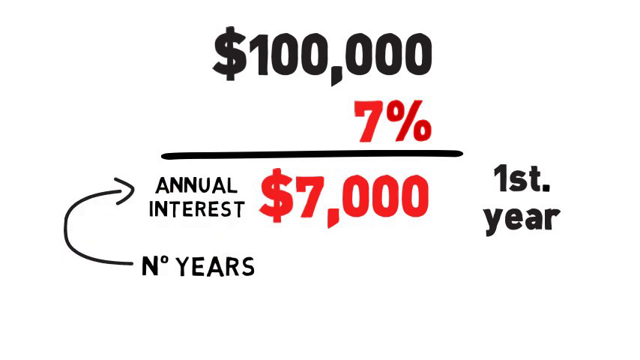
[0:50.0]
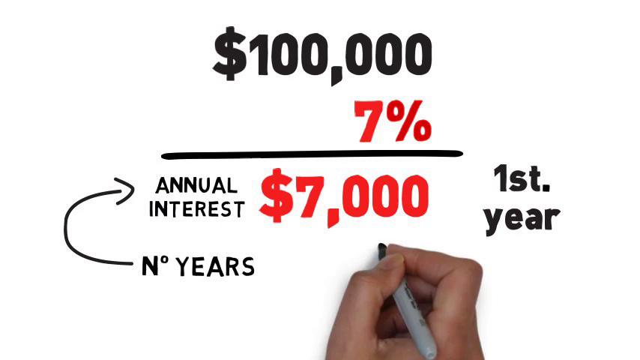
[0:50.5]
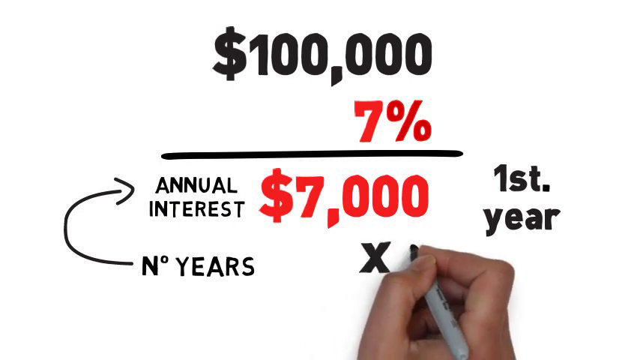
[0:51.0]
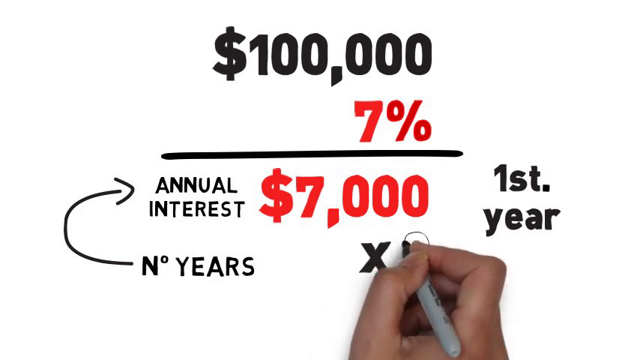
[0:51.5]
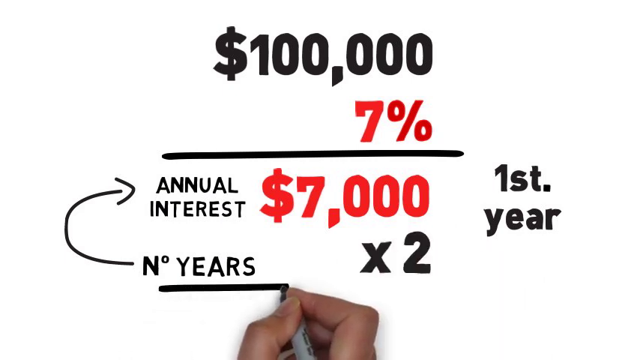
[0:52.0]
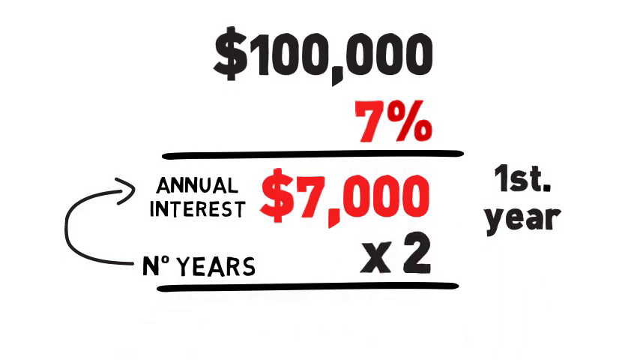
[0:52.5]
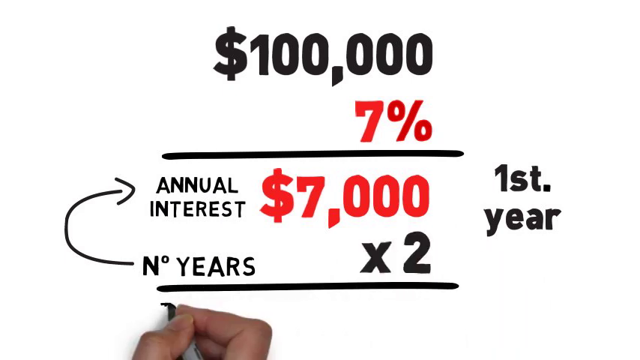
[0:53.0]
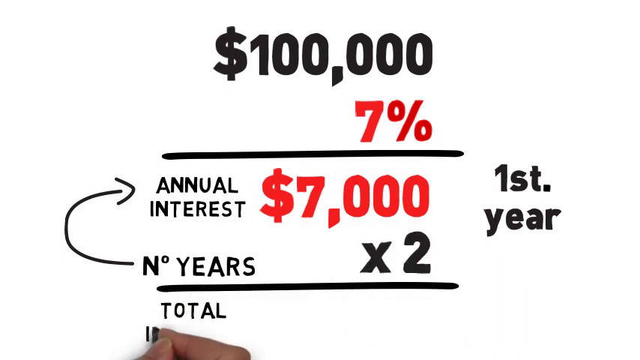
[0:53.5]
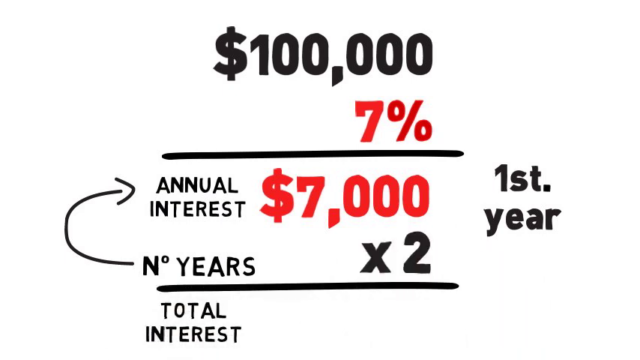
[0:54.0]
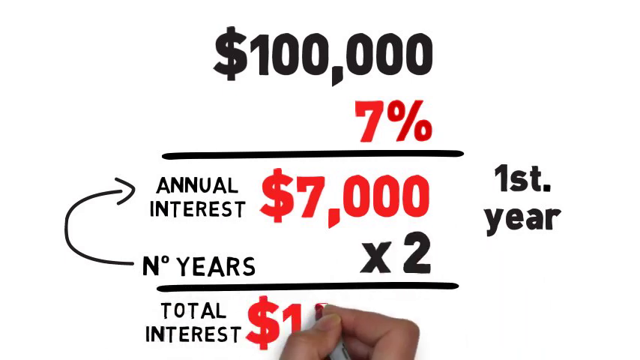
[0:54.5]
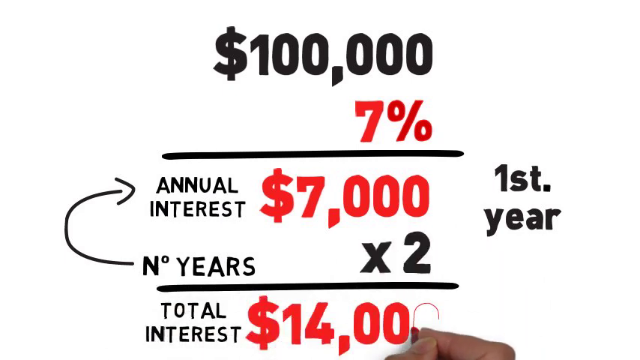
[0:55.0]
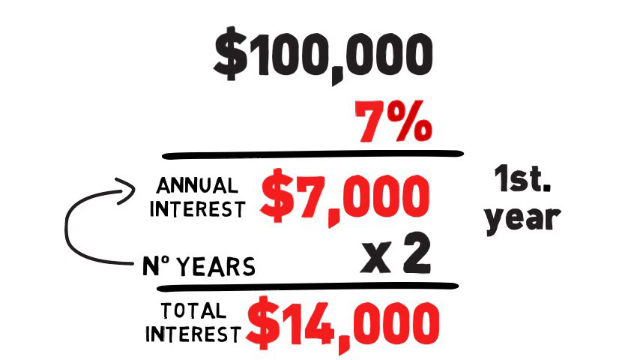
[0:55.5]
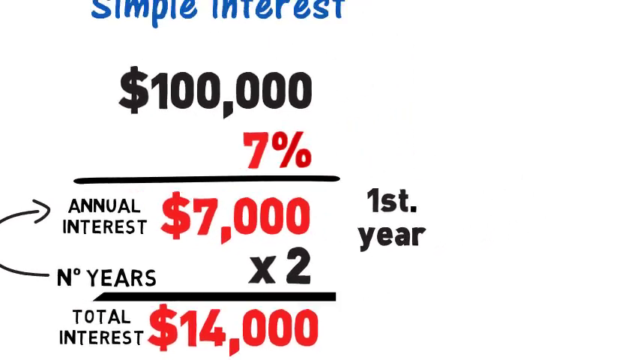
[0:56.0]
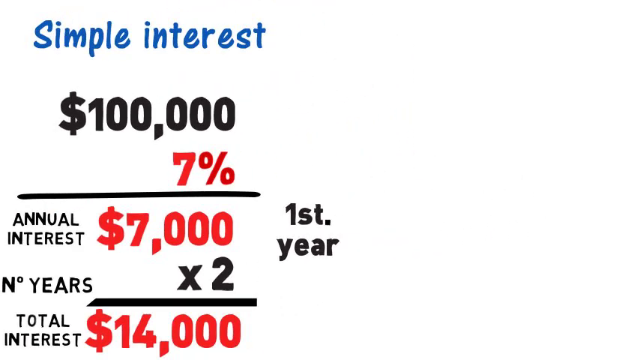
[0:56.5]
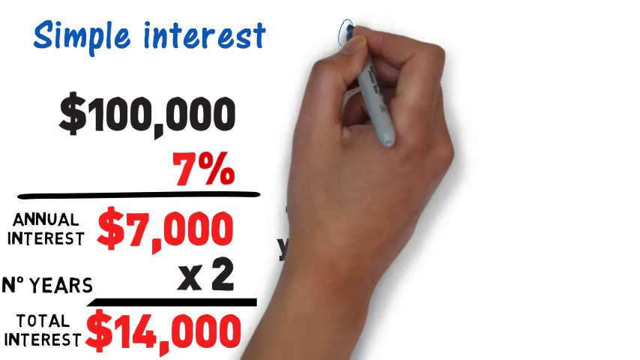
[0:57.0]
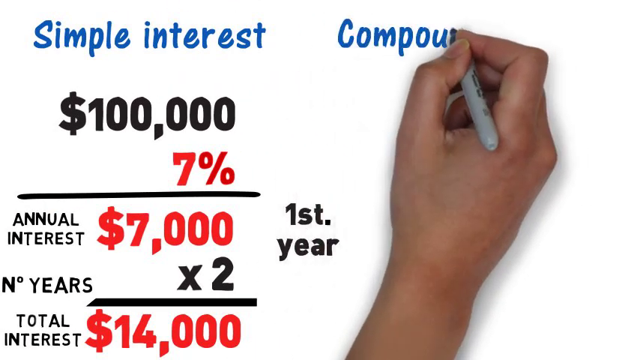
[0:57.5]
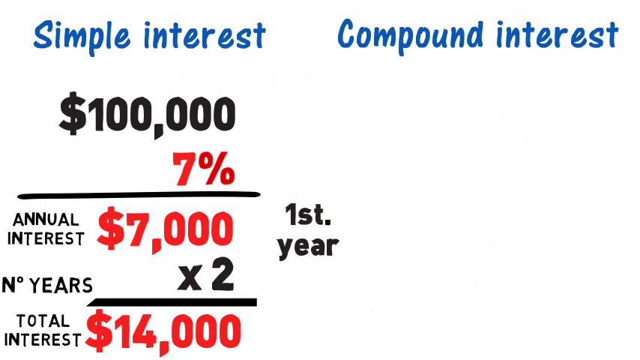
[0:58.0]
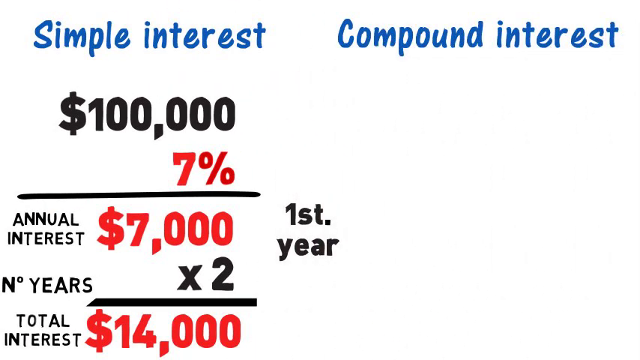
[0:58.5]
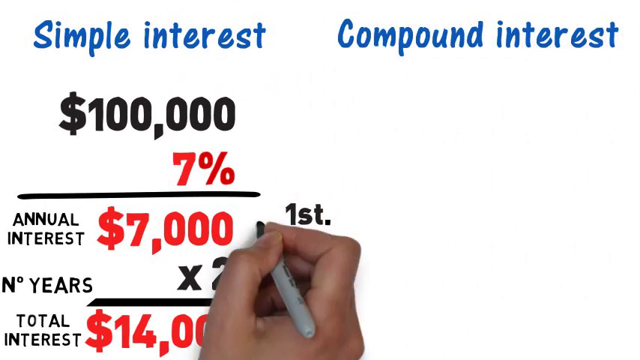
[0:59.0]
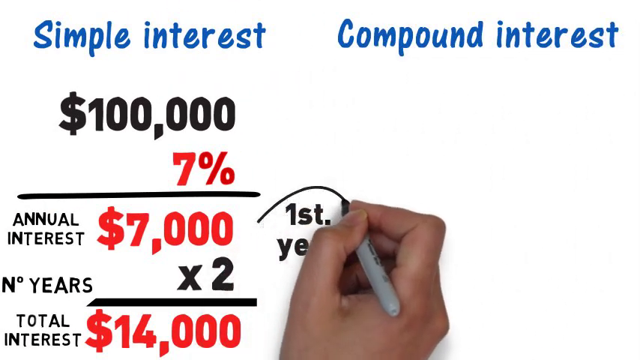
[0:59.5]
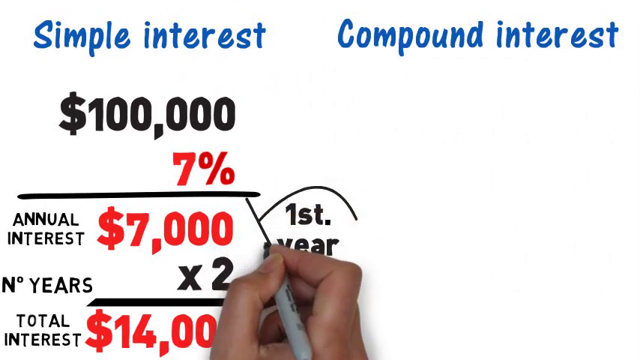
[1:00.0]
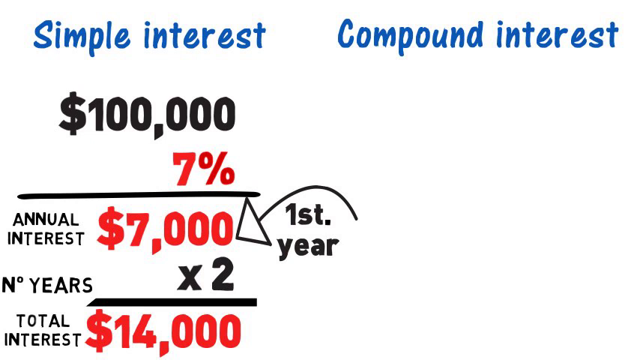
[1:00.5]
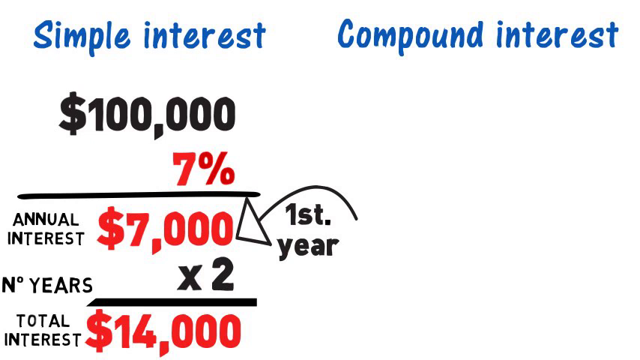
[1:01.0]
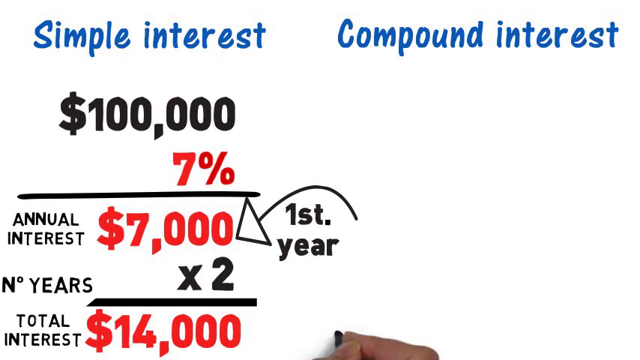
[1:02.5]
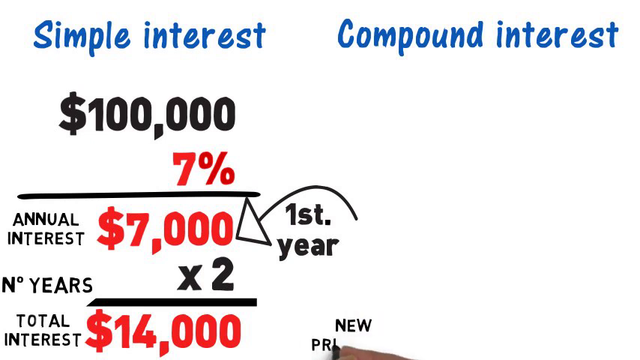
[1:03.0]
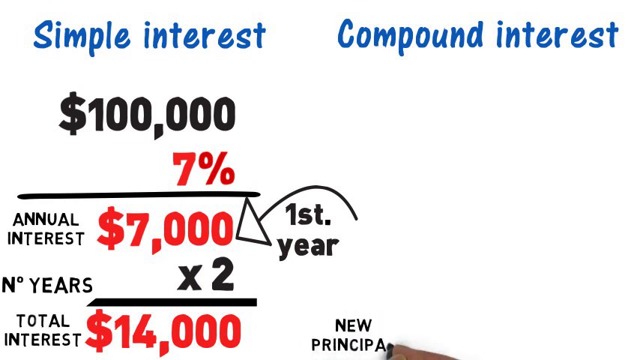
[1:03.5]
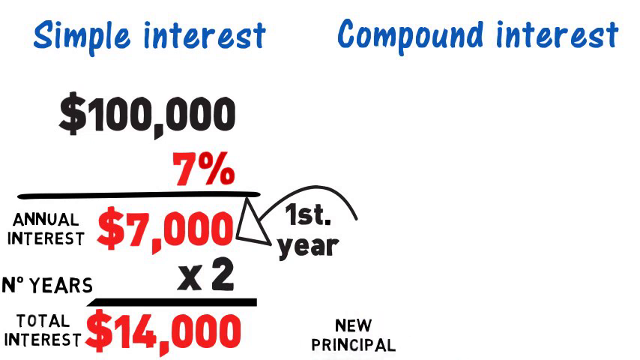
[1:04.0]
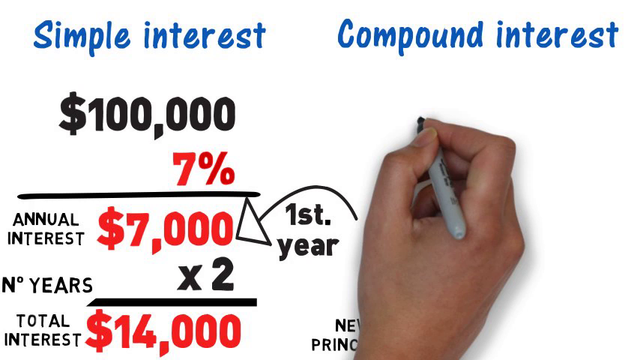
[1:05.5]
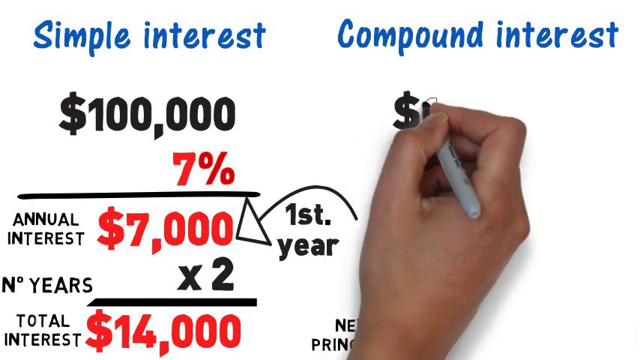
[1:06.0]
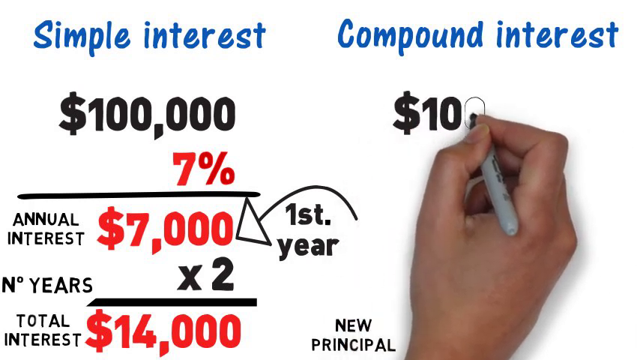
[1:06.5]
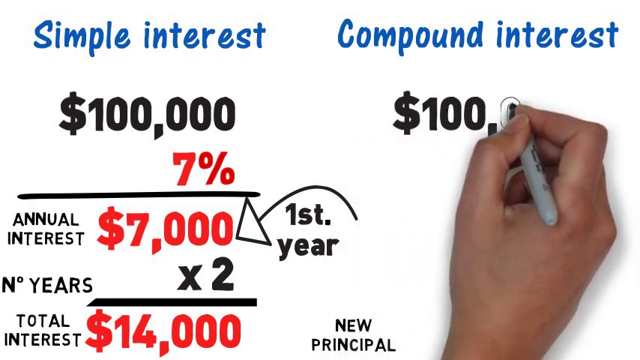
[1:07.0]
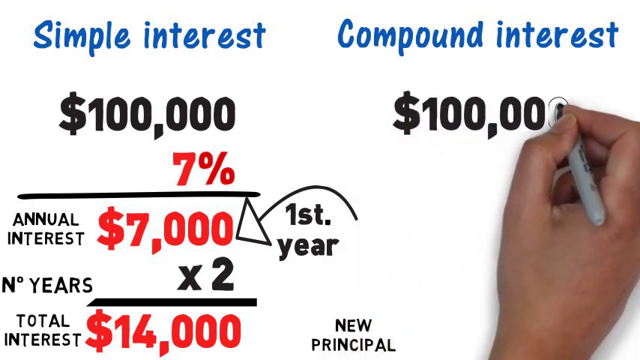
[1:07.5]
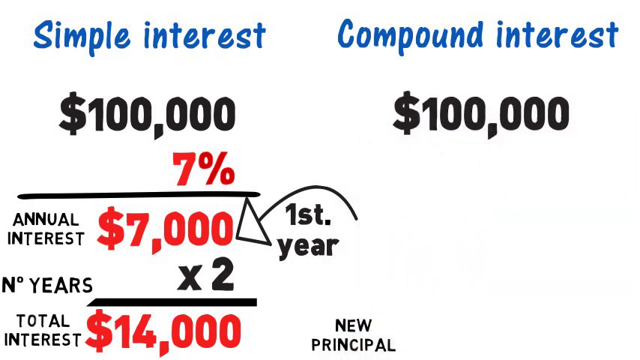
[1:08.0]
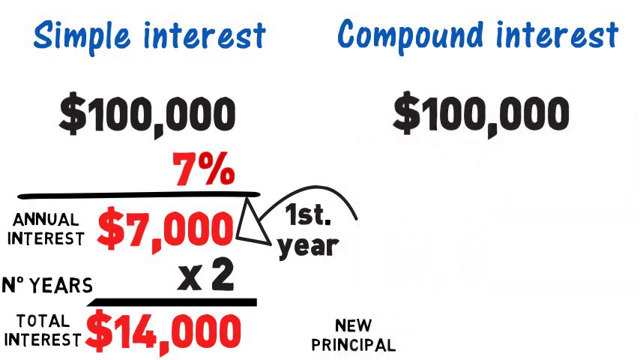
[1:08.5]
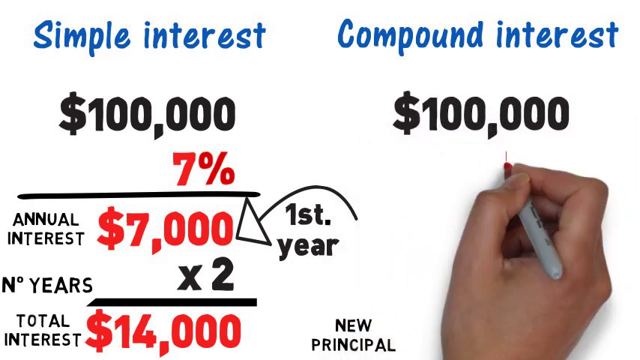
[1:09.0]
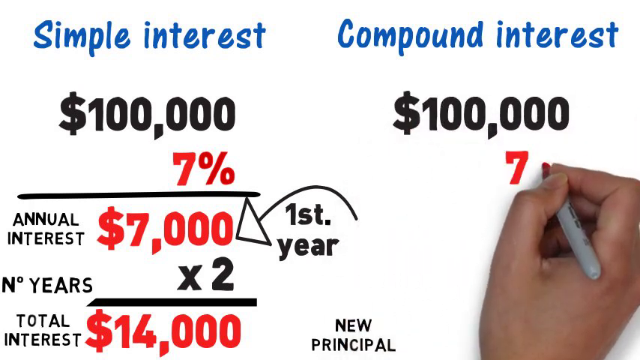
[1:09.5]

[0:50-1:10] The same screen shows $100,000 multiplied by 7%, giving an annual interest of $7,000 for the first year. Below, in another row, the hand writes "n number of years" and then a multiplication by 2, for 2 years, giving a total of $14,000 written in red. The camera moves away a bit to reveal another subtitle on the right reading "Compound Interest", with the text "New Principal" below it. The hand, holding a black Sharpie, writes "$100,000" under the "Compound Interest" title, seemingly about to multiply it by 7%.